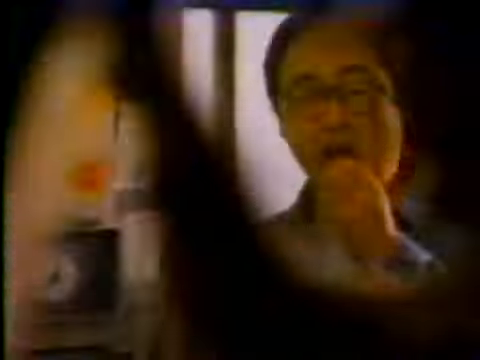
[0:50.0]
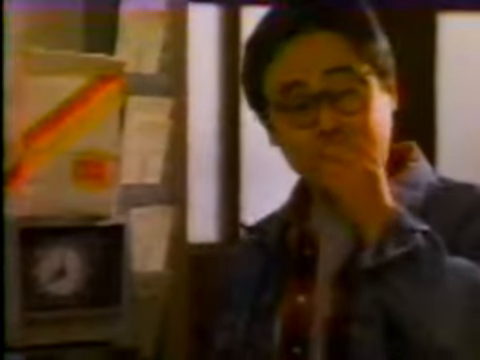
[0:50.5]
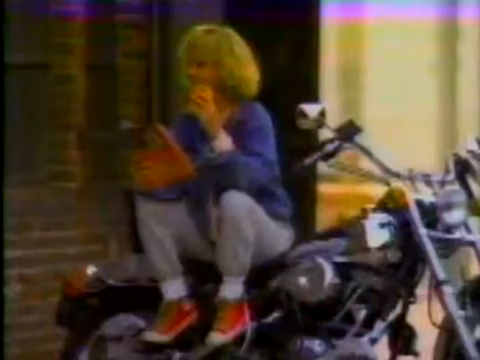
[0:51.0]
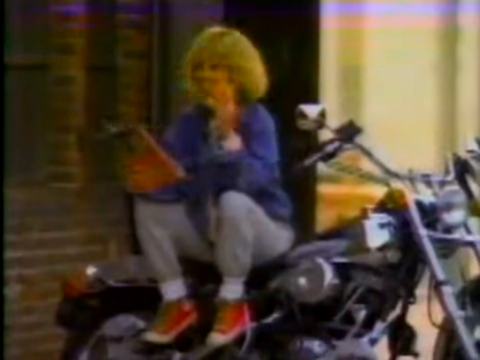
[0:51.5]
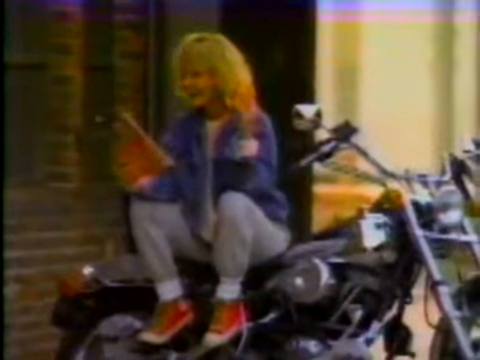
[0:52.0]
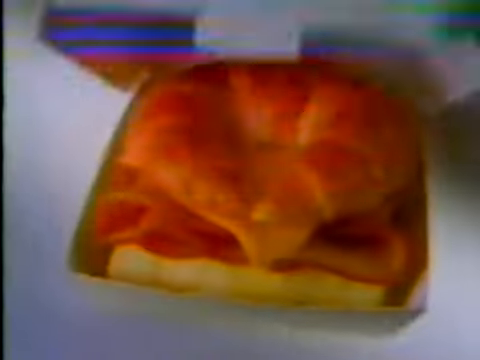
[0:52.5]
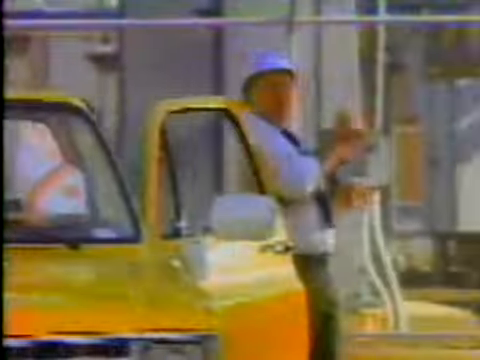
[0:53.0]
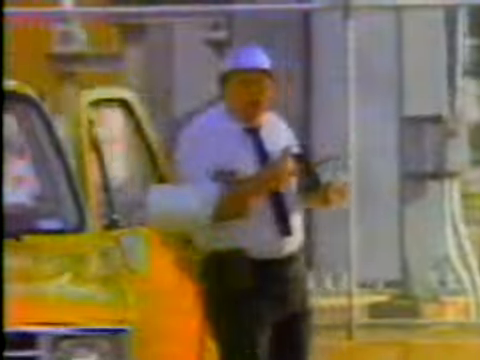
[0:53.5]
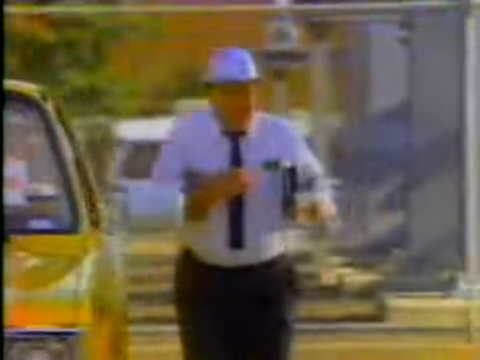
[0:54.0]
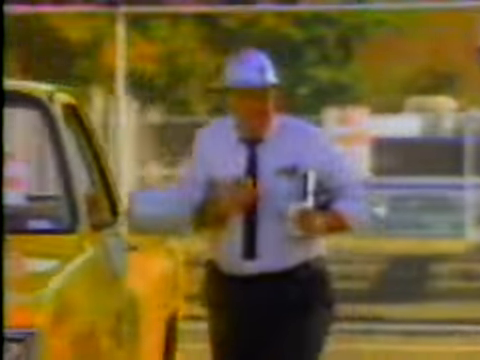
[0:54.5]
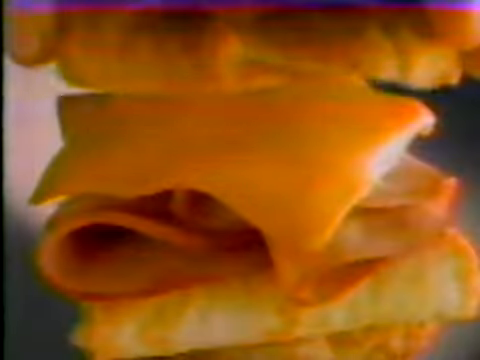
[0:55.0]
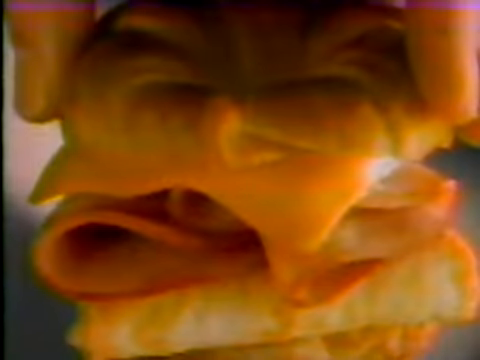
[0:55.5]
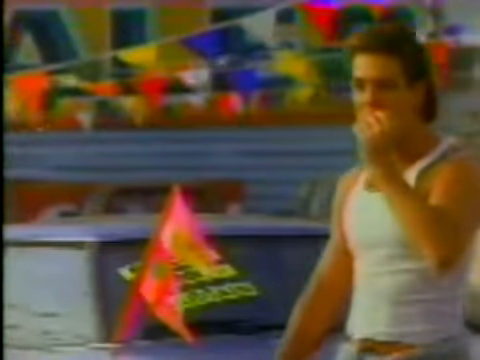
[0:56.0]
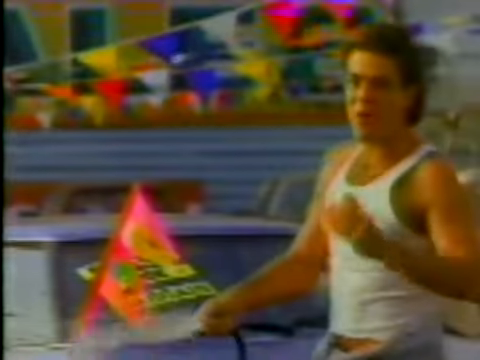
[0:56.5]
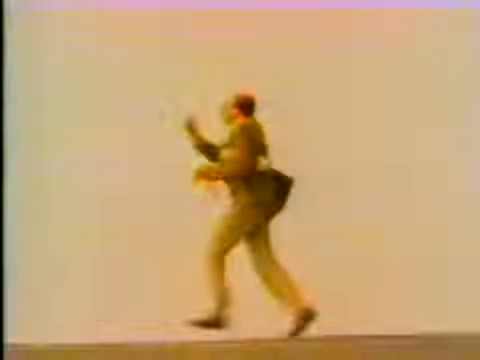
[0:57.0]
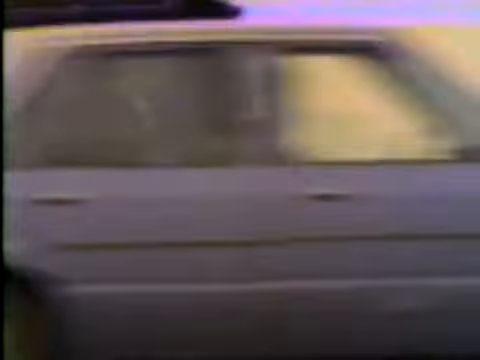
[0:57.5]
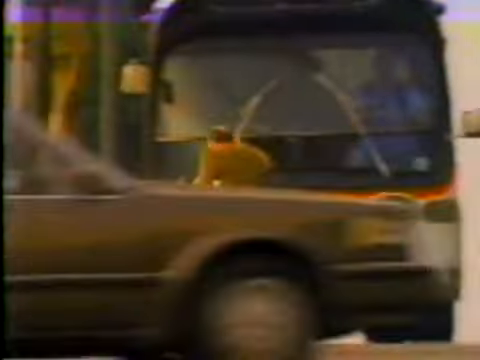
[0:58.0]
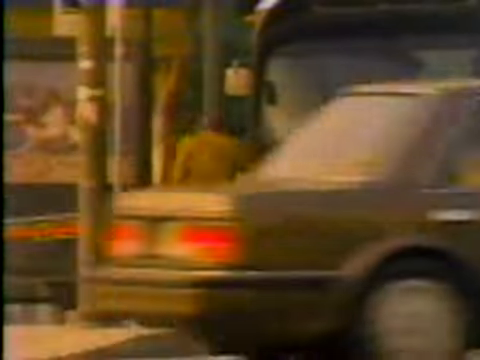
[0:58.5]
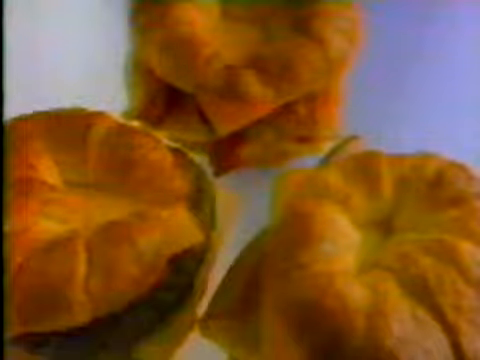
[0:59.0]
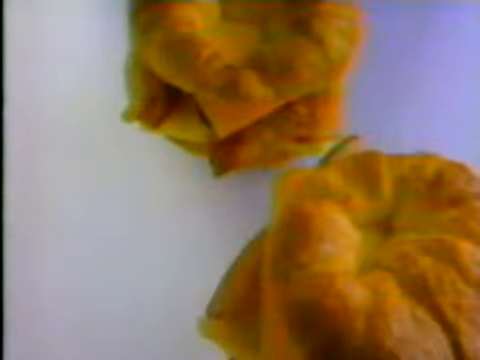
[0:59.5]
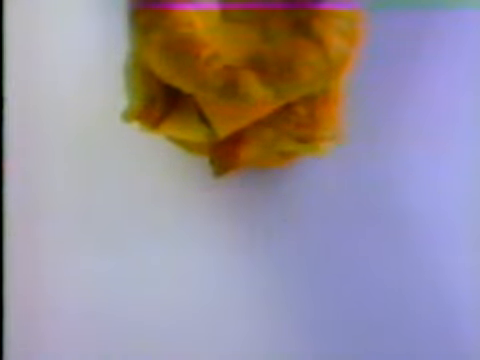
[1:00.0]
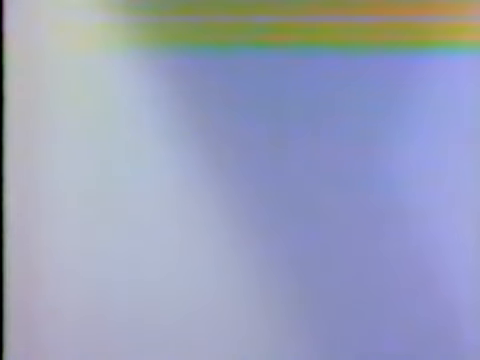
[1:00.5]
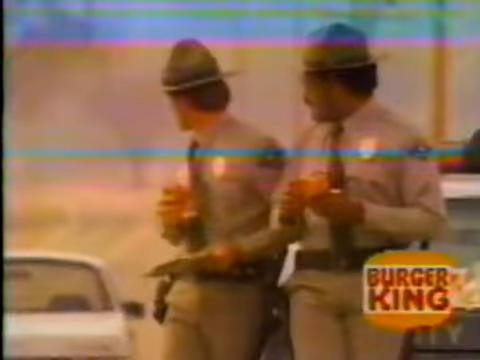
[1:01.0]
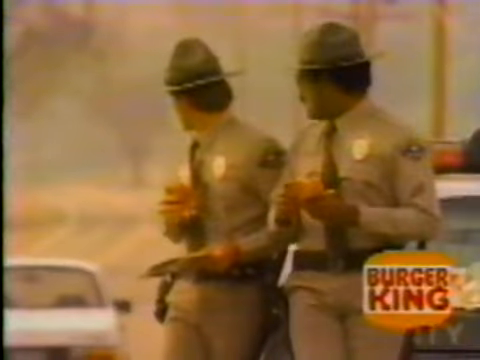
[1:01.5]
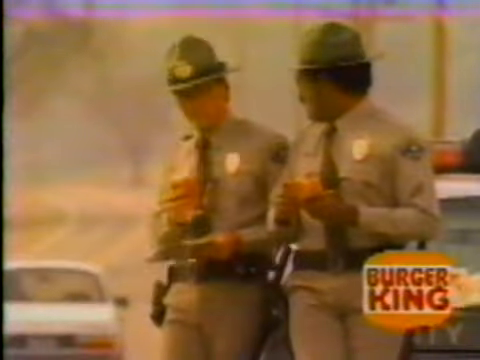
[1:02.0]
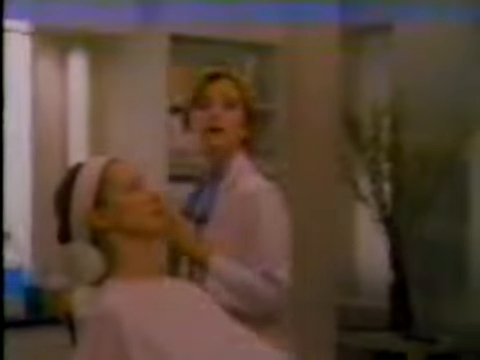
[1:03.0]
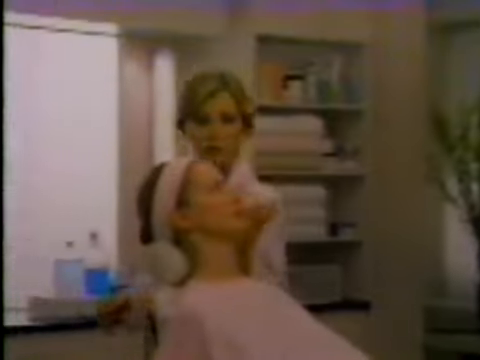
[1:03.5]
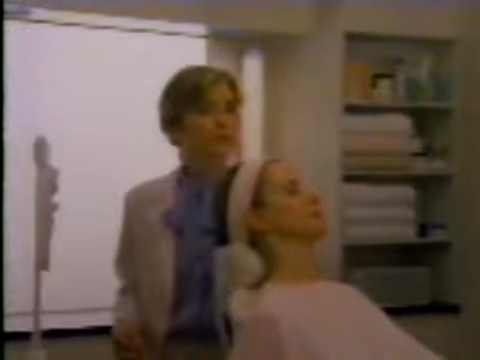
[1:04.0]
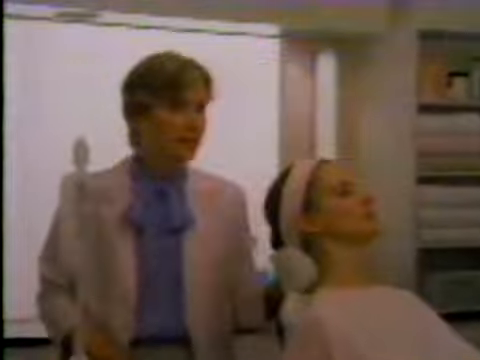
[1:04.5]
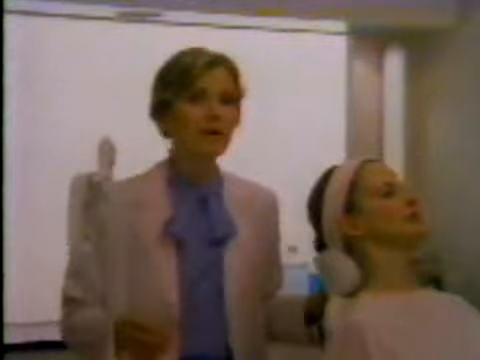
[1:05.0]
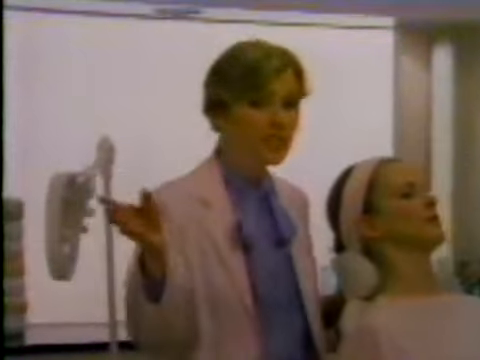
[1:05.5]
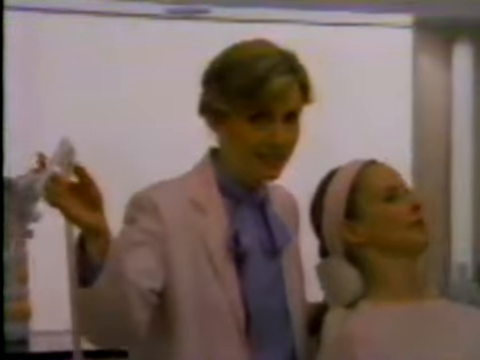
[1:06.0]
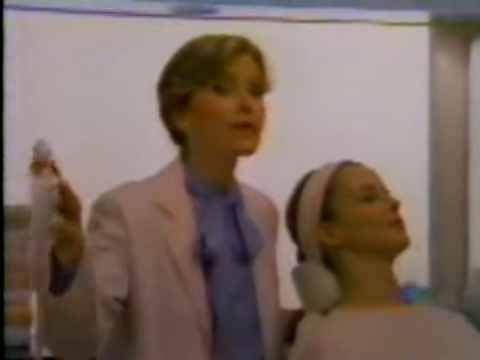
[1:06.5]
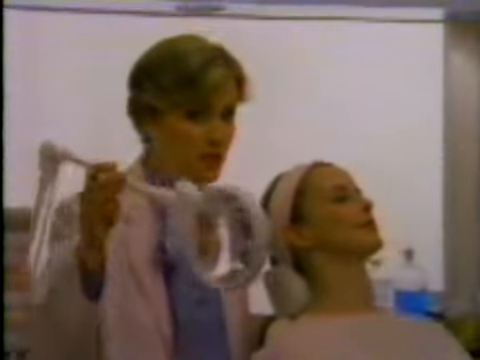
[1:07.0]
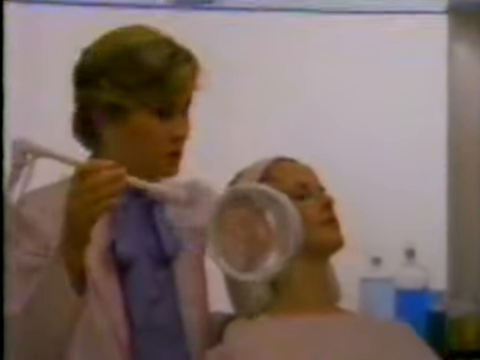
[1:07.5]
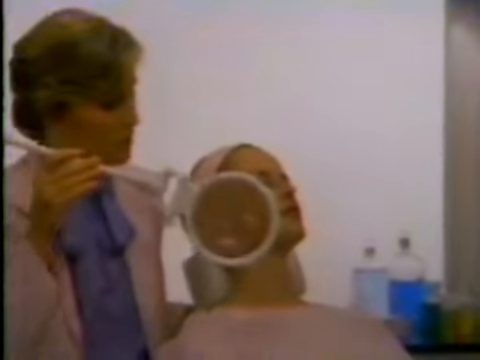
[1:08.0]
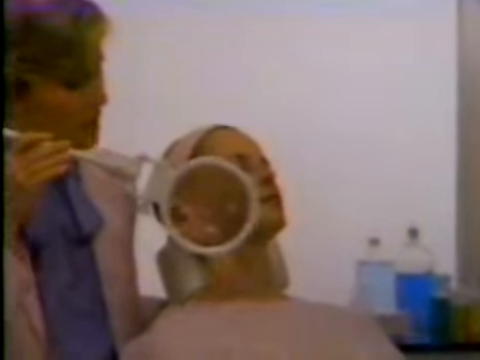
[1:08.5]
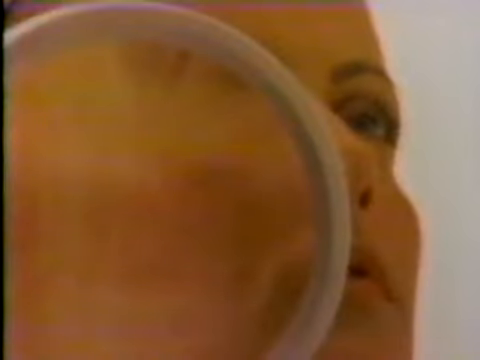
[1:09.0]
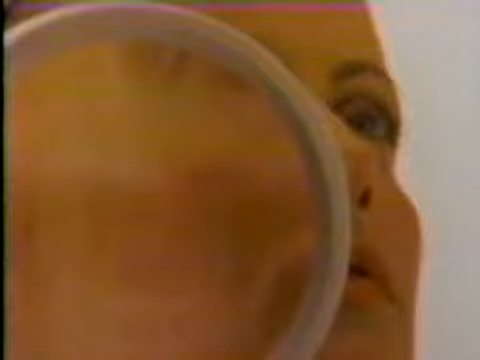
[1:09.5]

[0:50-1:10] A guy is seen in the reflection of a mirror eating a burger. A lady sitting down also enjoys the burger. A girl working at a construction site stands right beside a yellow car, drinking tea and eating the burger. A guy wearing a white vest stands at a stadium, also enjoying the burger. Another guy, apparently a truck driver, runs to a truck, running out of time because of the burger he went to buy. Two police officers enjoy the burger. Then two ladies appear; one looks like a facial doctor and checks the other person's face.